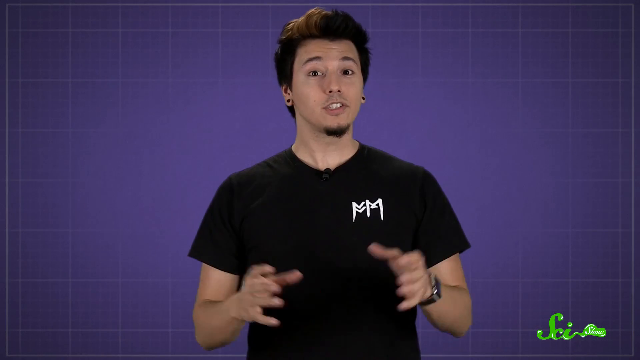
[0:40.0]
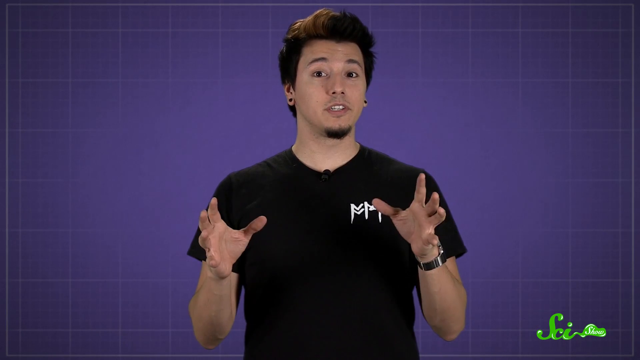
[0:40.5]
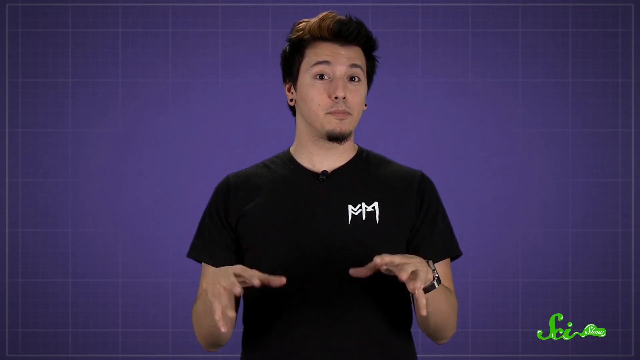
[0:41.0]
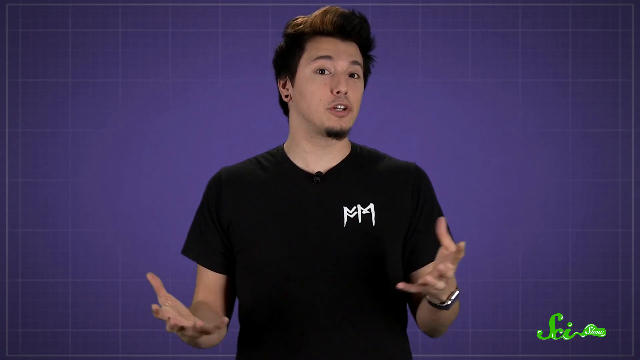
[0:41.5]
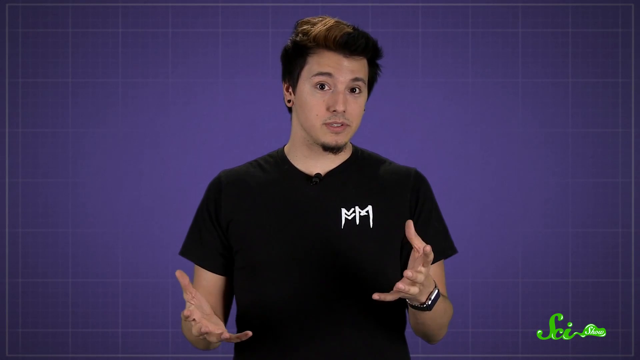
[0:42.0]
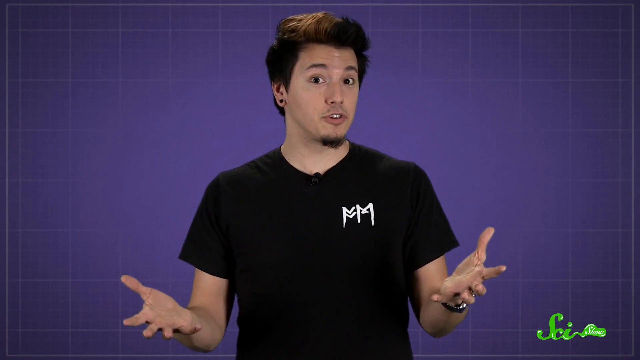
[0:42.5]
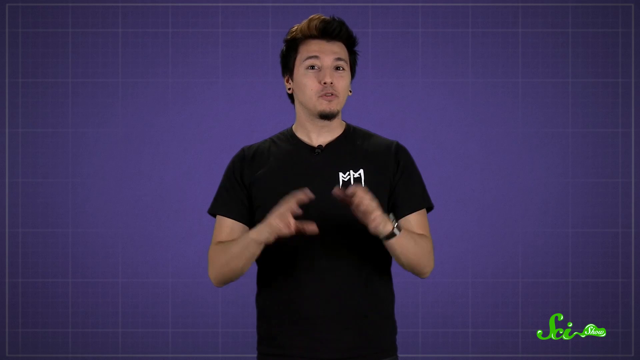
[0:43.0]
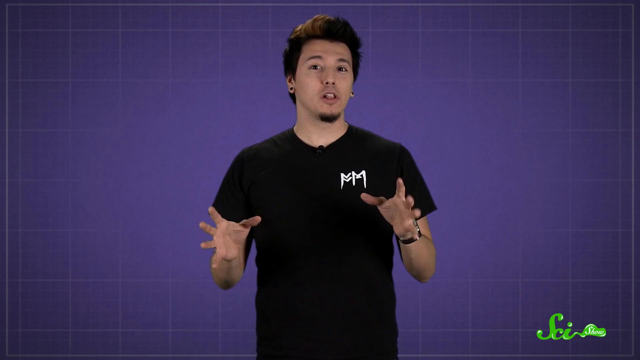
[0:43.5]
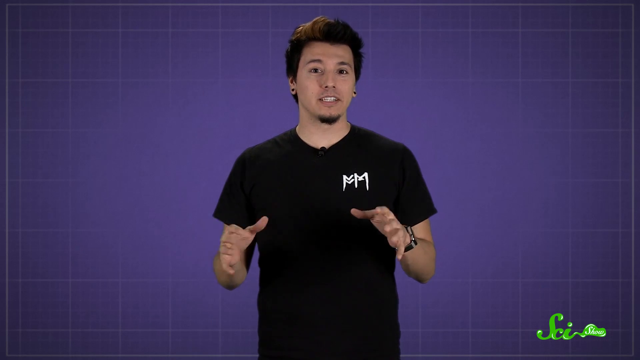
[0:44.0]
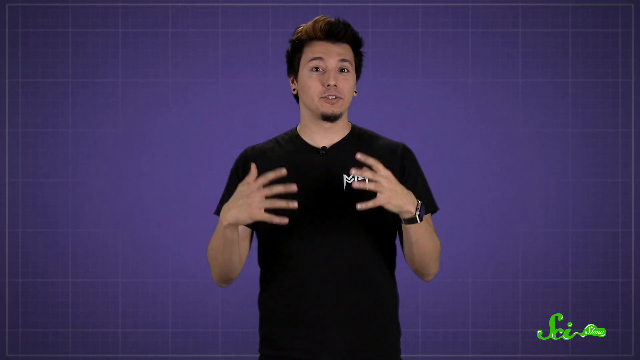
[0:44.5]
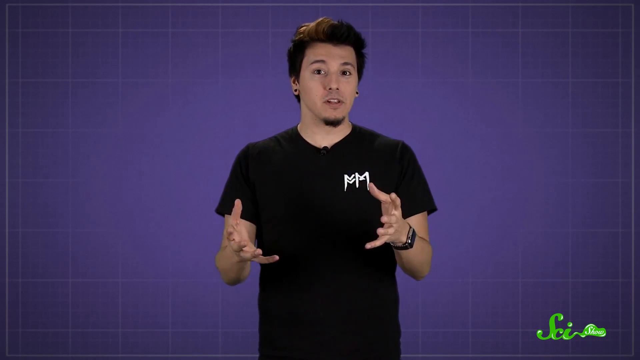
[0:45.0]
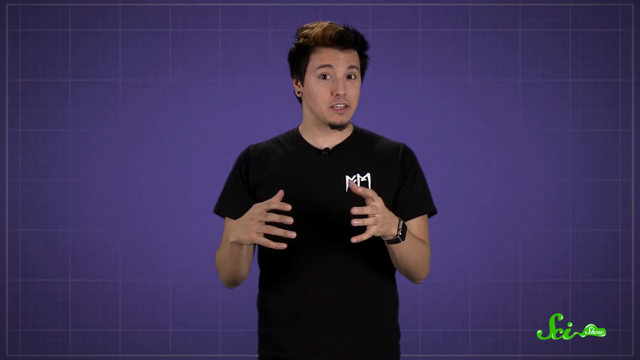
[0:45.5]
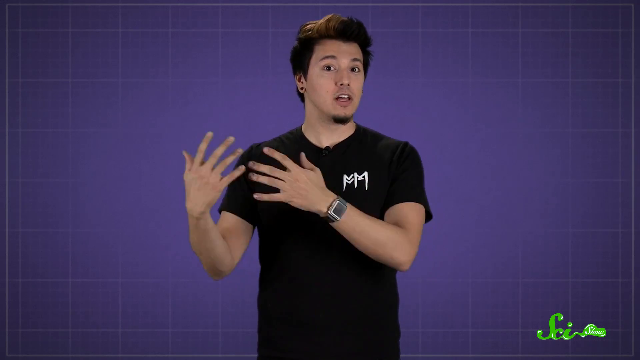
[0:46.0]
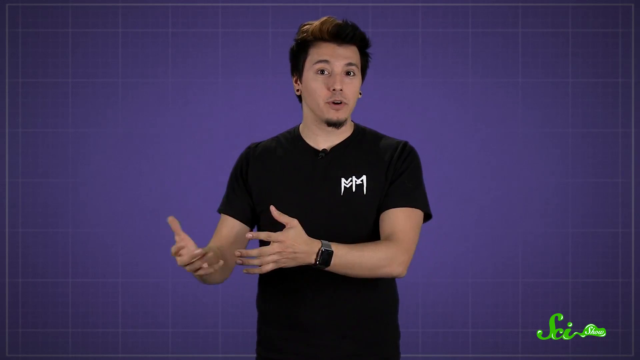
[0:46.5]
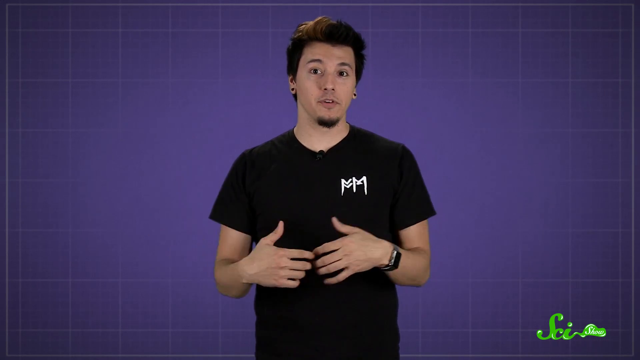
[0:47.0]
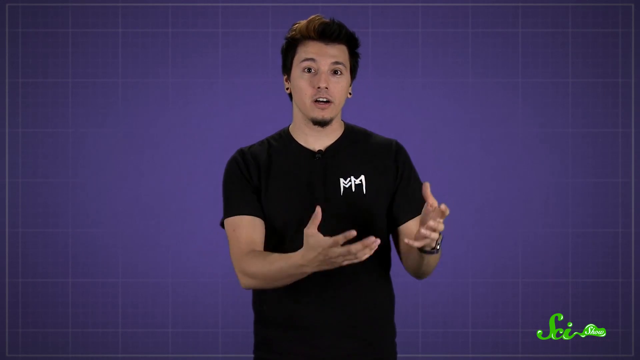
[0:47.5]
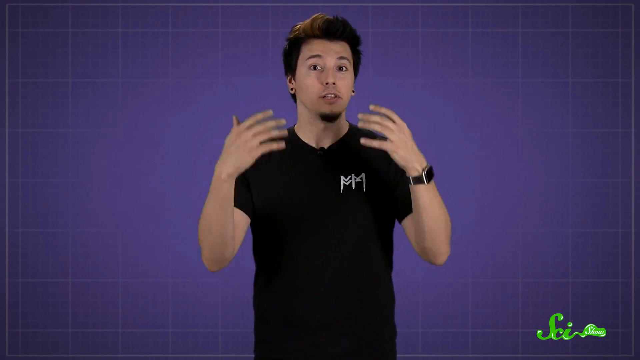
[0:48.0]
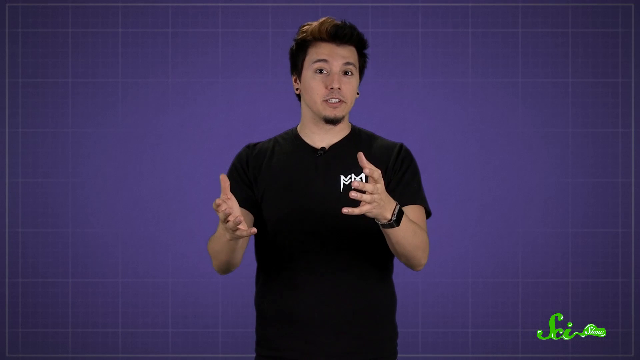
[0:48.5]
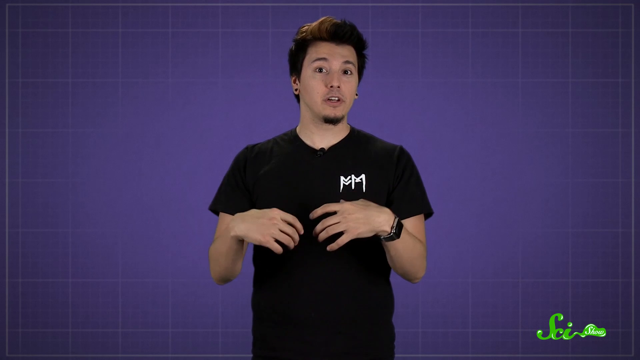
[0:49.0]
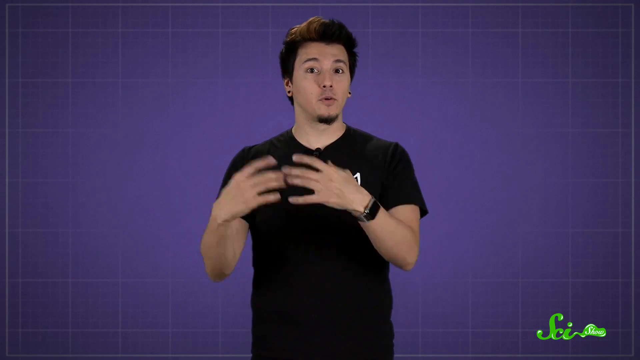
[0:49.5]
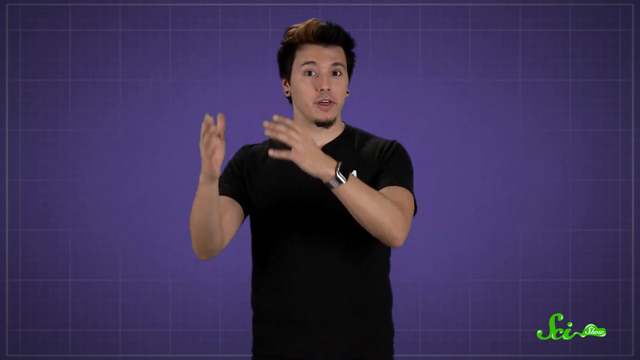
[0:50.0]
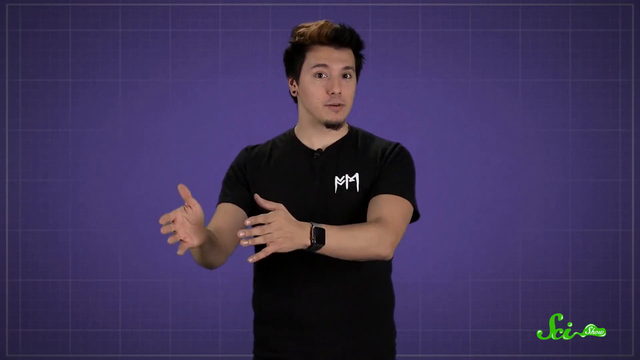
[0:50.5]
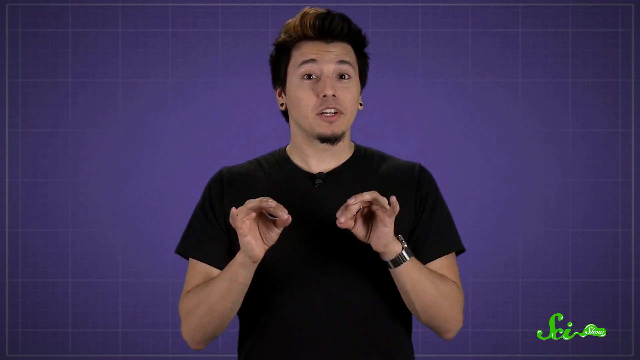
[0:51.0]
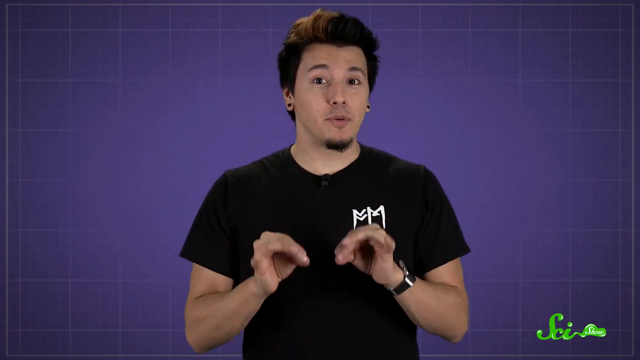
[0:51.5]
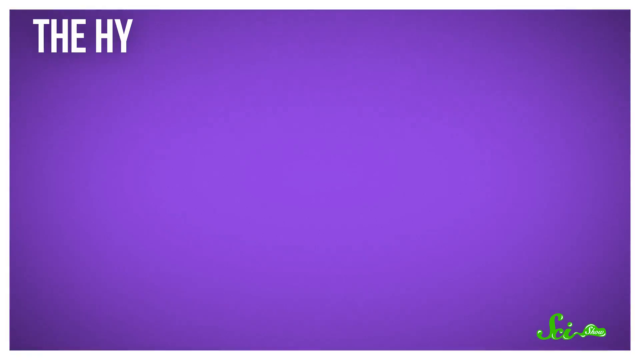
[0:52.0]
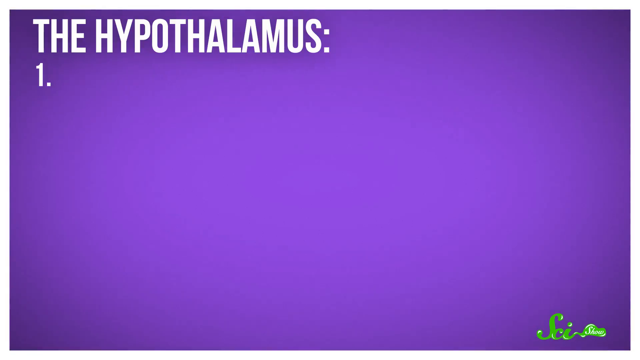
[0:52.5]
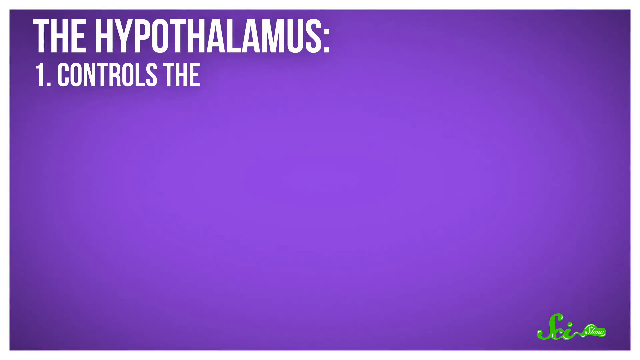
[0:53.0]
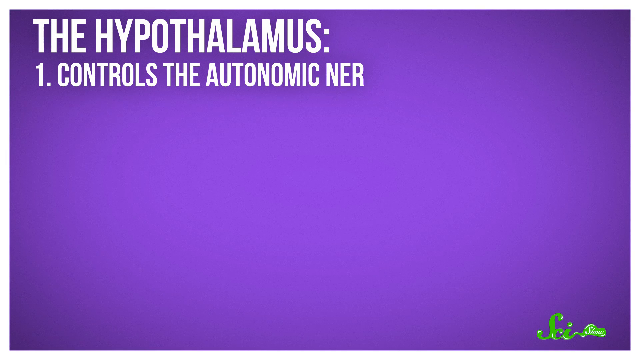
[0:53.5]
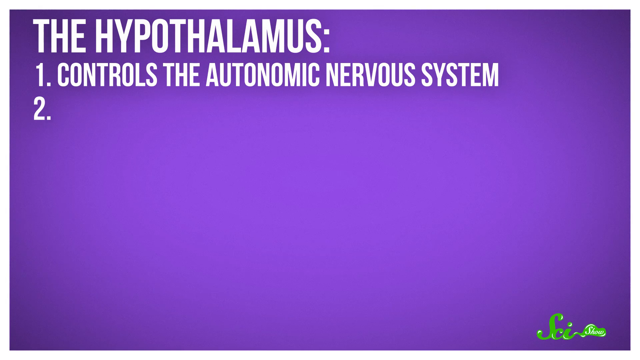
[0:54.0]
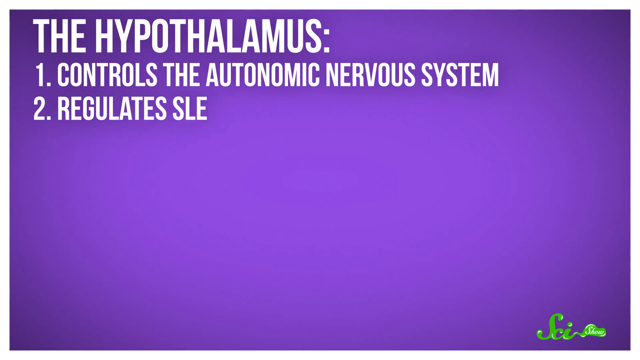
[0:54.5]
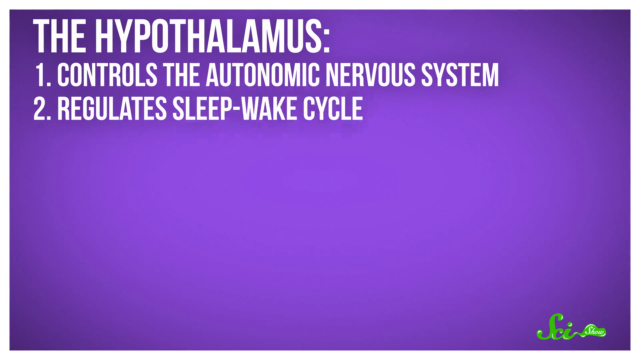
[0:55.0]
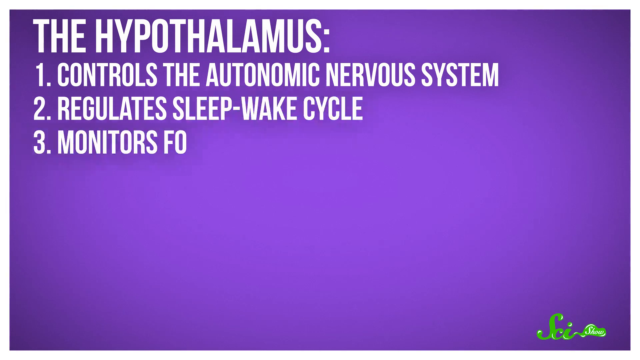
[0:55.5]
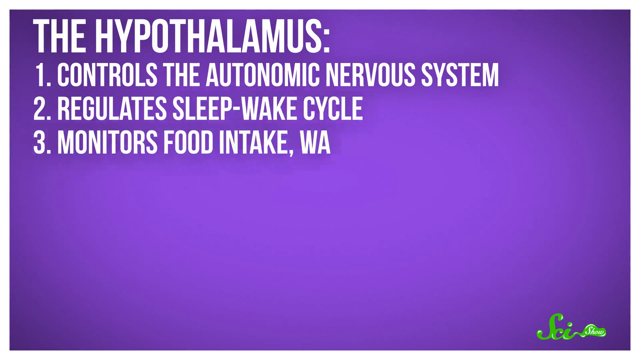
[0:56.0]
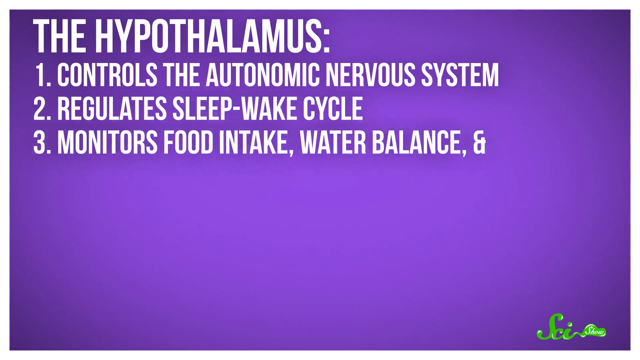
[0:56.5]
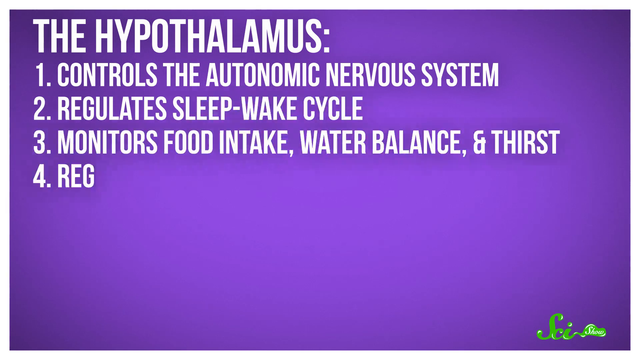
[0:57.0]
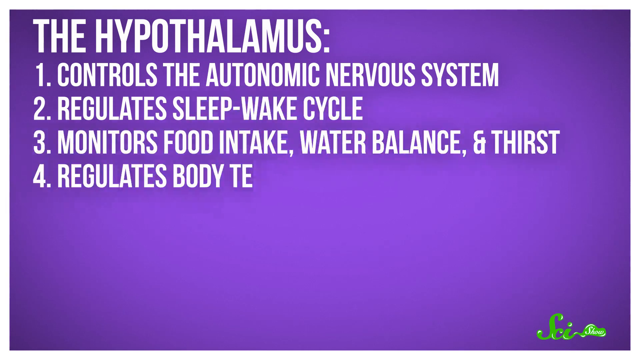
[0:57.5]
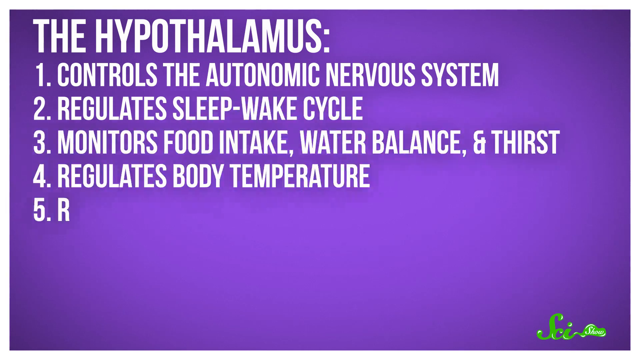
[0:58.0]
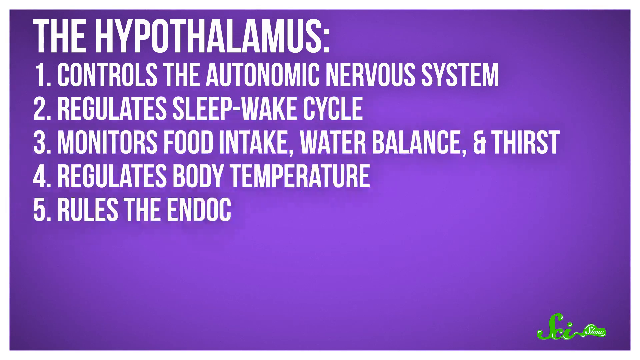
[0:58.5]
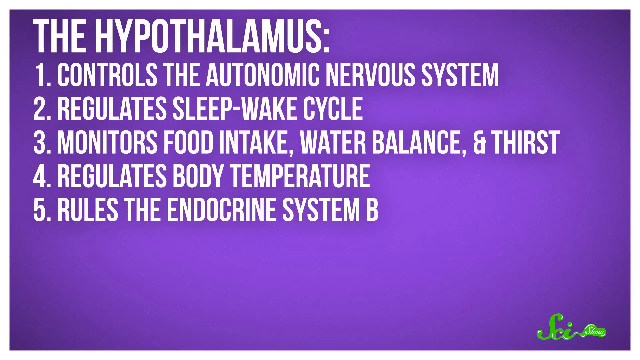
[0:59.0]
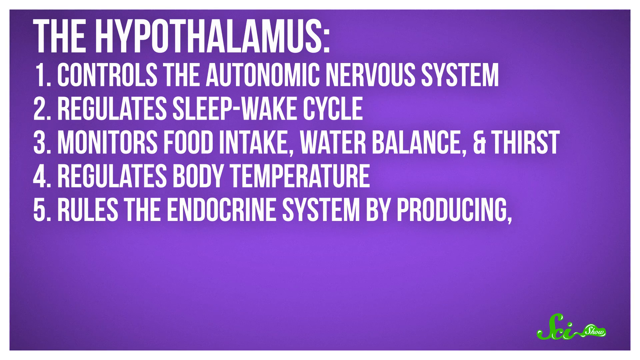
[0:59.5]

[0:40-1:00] A young man in a black T-shirt speaks, with a black wristwatch strapped to his left wrist. He has a very tiny goatee on his chin and wears small, round, flat, black earring studs. His thick black hair has some brown highlights on the front right side. He stands against the purple backdrop, seen from head to waist, and gestures with his hands as he speaks, moving both hands slightly to the left, slightly to the right and in front of him. The screen then transitions to a plain purple screen with a header in the upper left reading "the hypothalamus." A numbered list begins to appear, from number one to number five, listing the functions of the hypothalamus.